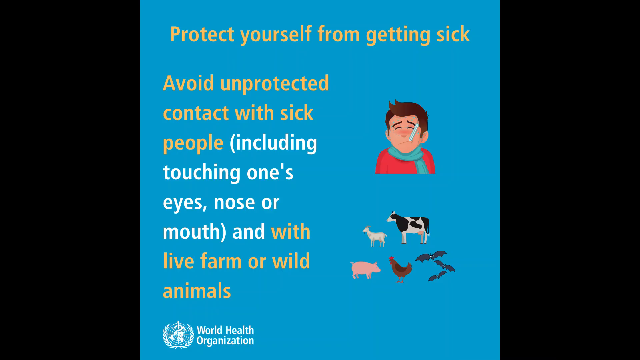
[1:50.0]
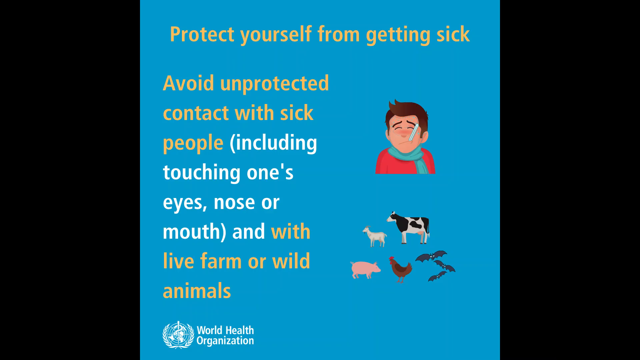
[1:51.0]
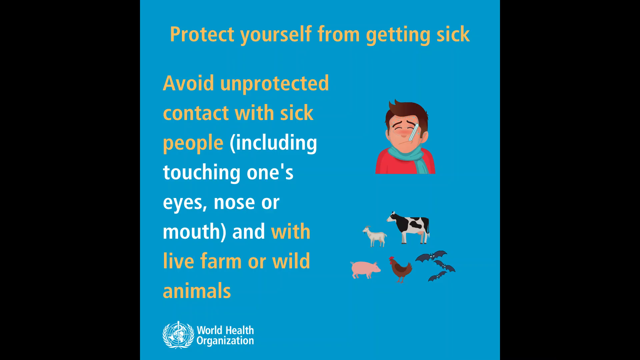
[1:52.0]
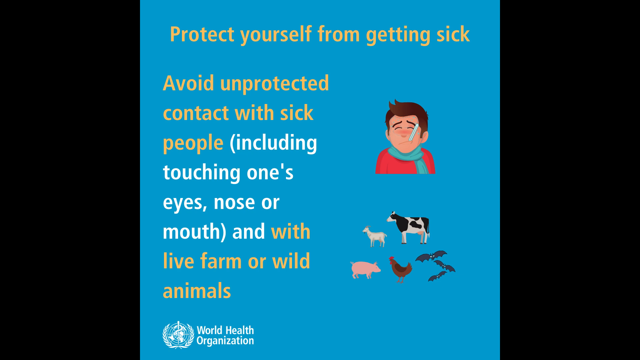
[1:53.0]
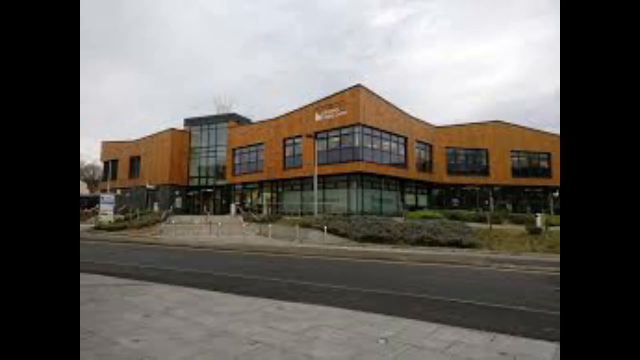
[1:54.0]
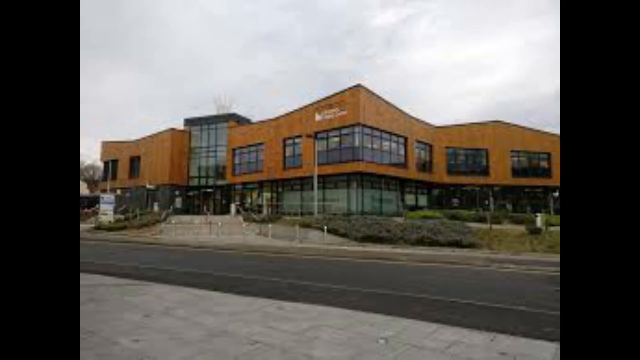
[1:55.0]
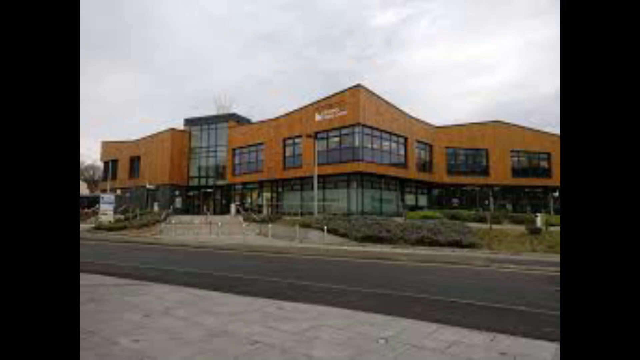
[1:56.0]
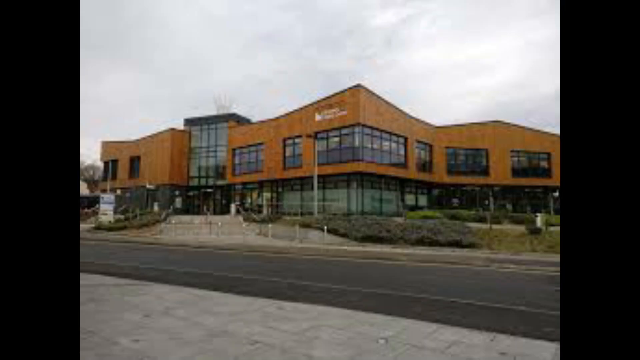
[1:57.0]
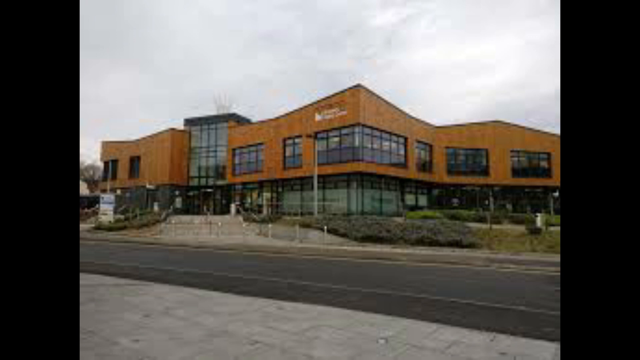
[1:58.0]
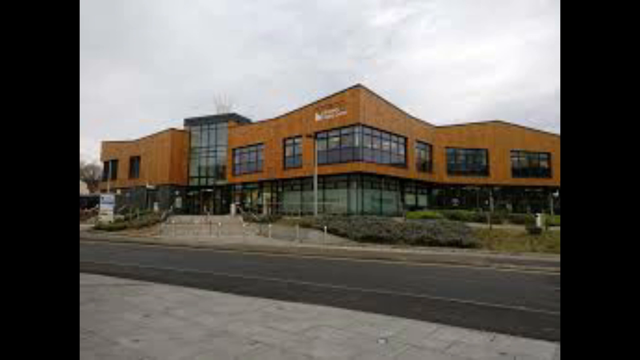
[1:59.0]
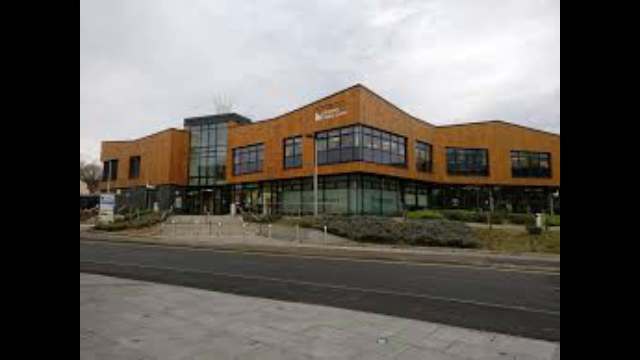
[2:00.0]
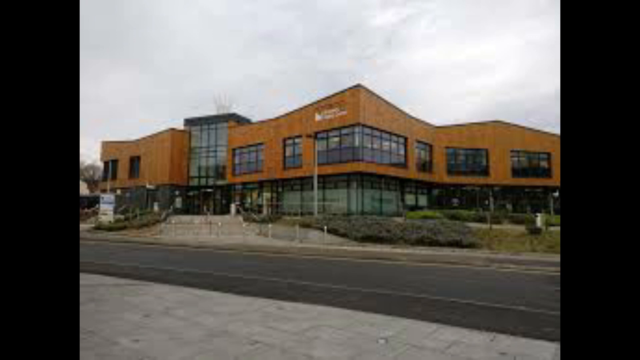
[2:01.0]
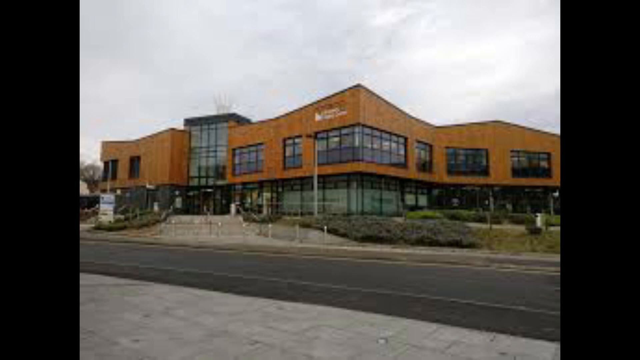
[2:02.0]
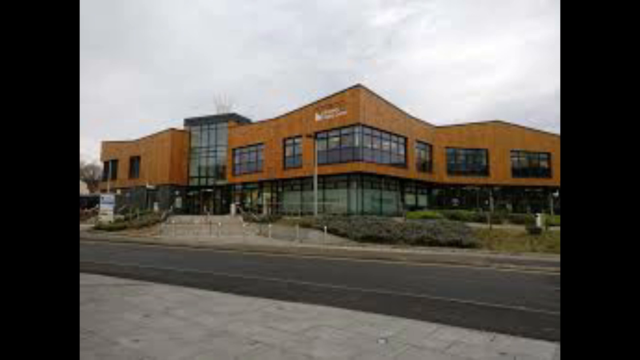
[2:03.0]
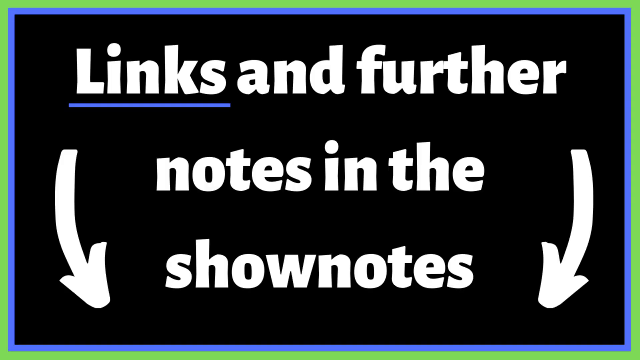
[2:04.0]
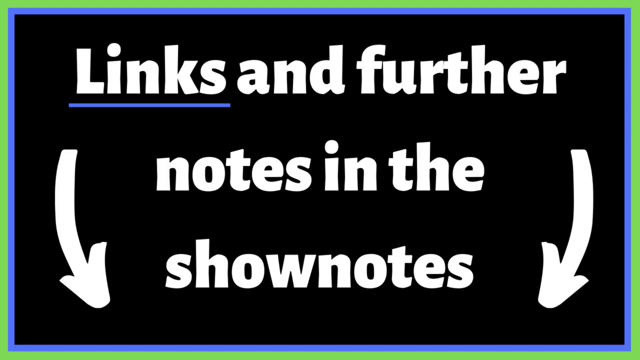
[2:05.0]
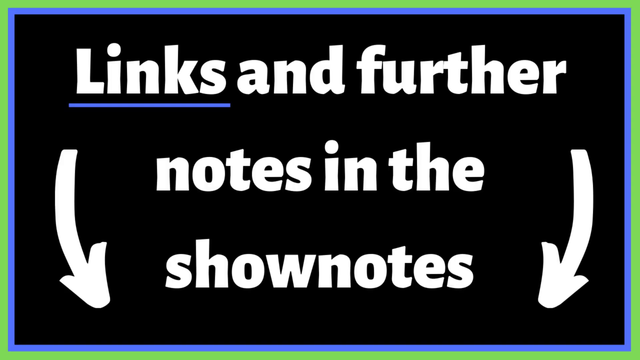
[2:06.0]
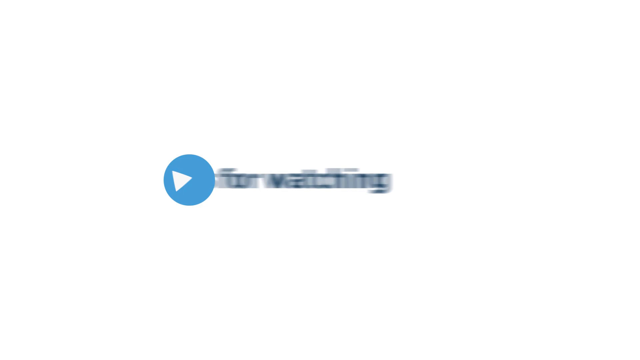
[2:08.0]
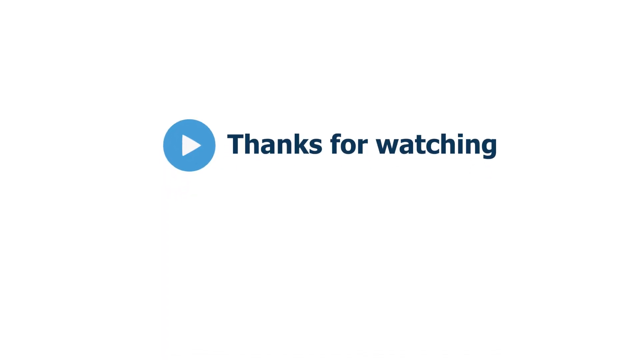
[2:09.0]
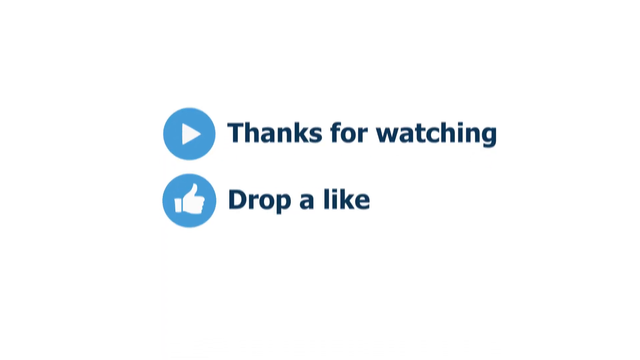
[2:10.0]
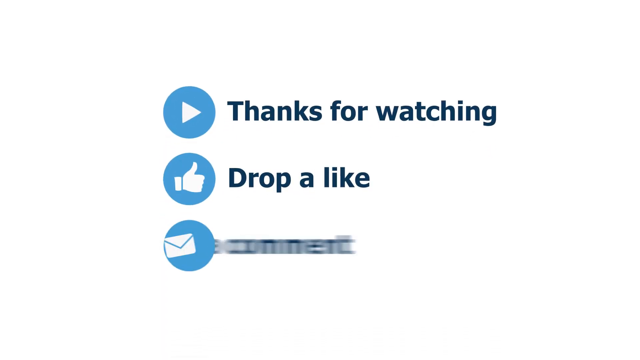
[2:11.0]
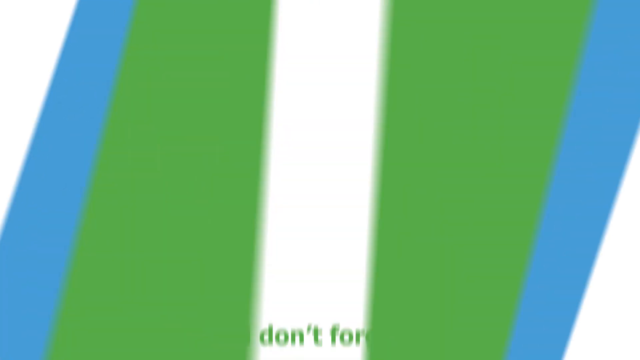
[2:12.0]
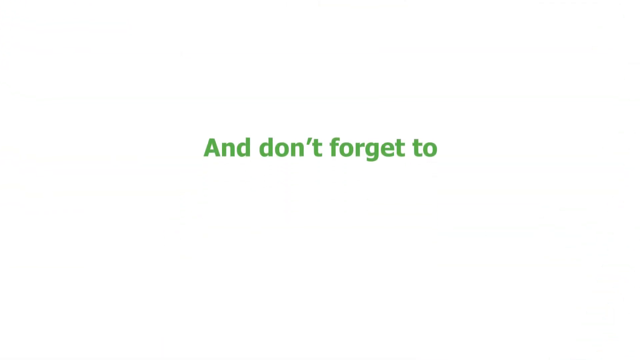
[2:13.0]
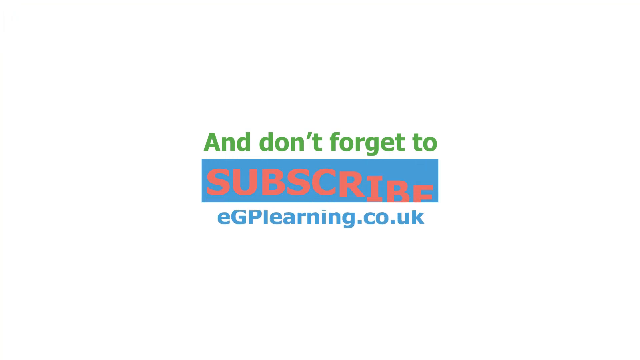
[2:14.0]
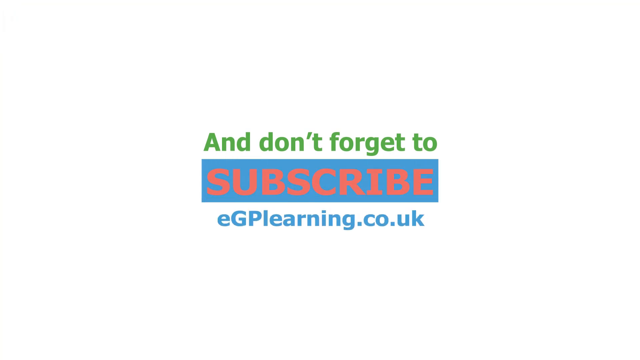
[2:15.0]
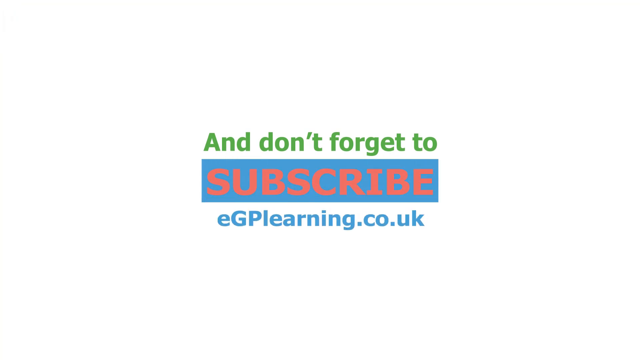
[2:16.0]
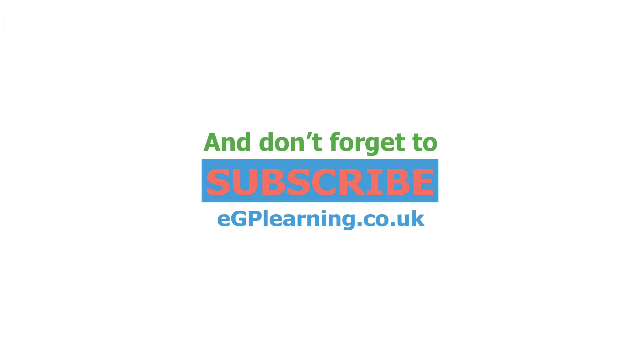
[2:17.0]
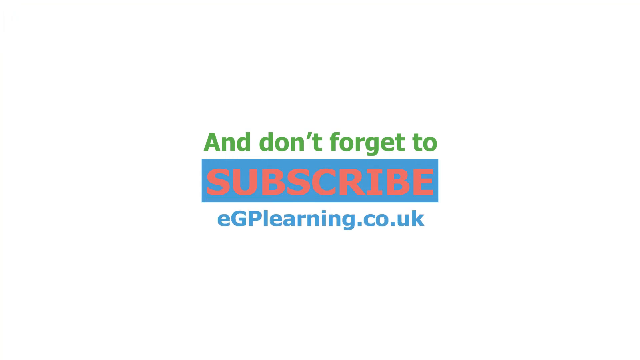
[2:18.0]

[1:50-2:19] A slide about protecting yourself from getting sick says "avoid unprotected contact with sick people, including touching one's eyes, nose, or mouth, and with live farm or wild animals." It has a picture of a man with a thermometer in his mouth, and animals below, such as pigs, chickens and cows. The video stays on this slide for a little while, then shows a slide of a building that looks like a hospital. It looks to be two stories: the top story is red brick with windows all around, and the level below looks like just windows. It looks like it is right off the road, with stairs up to it. It looks like a kind of cloudy day, with no sunshine visible. Then the video says there are links for further information about how to handle coronavirus and keep yourself safe from getting sick.